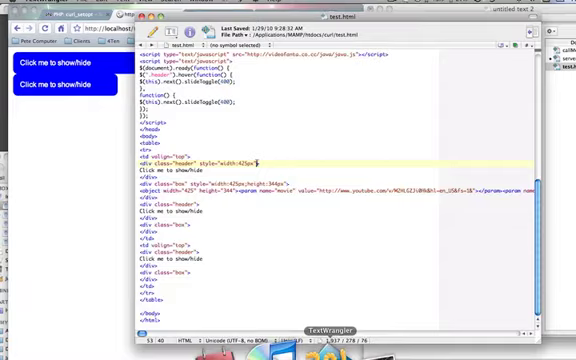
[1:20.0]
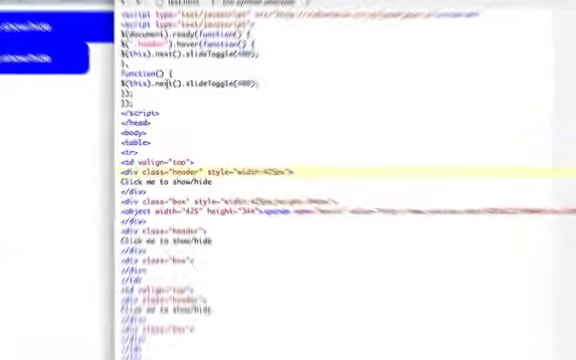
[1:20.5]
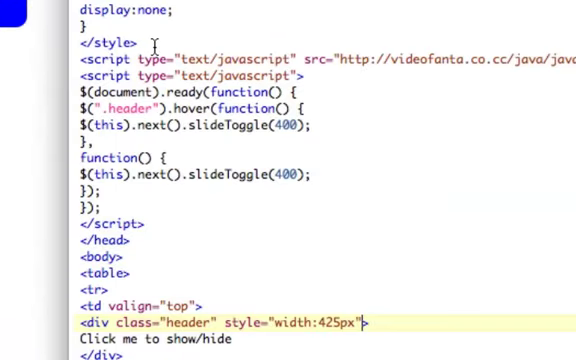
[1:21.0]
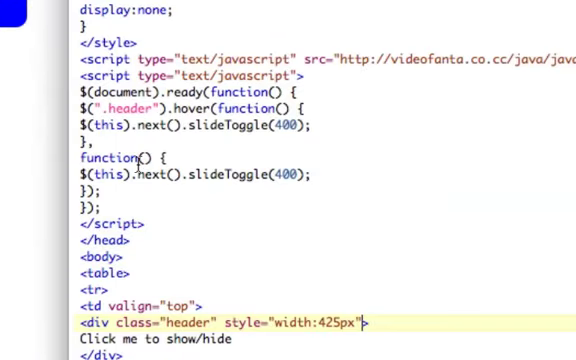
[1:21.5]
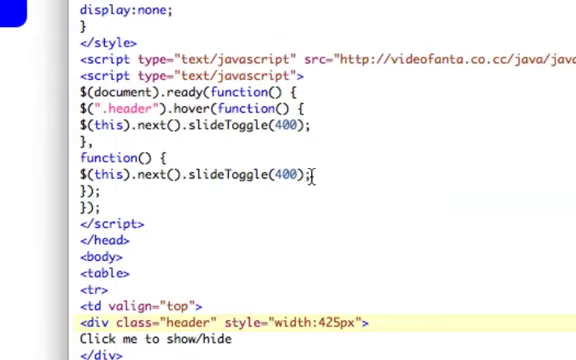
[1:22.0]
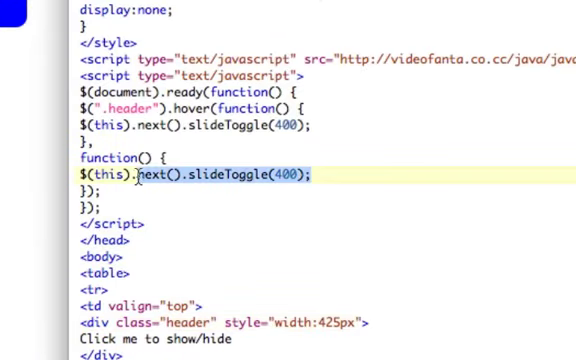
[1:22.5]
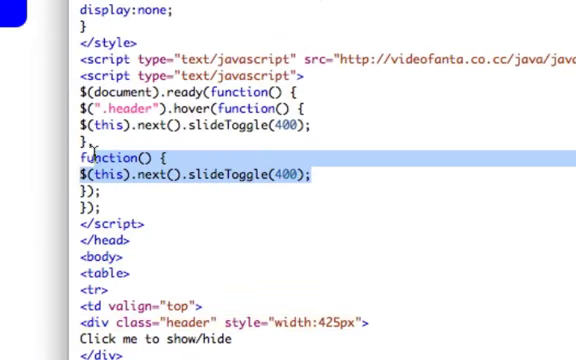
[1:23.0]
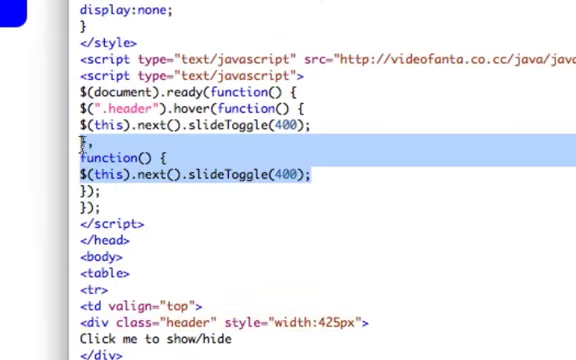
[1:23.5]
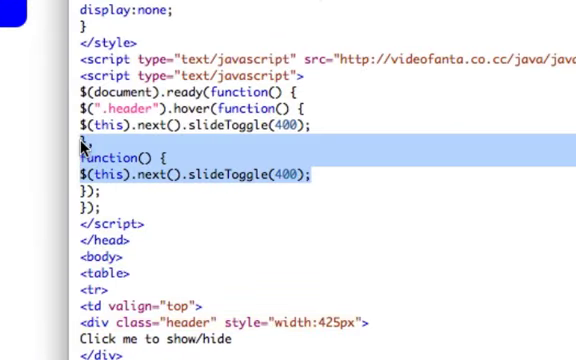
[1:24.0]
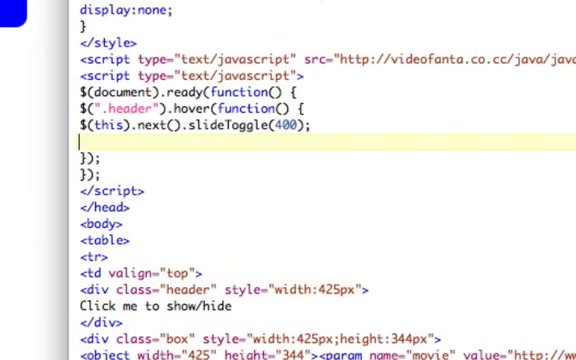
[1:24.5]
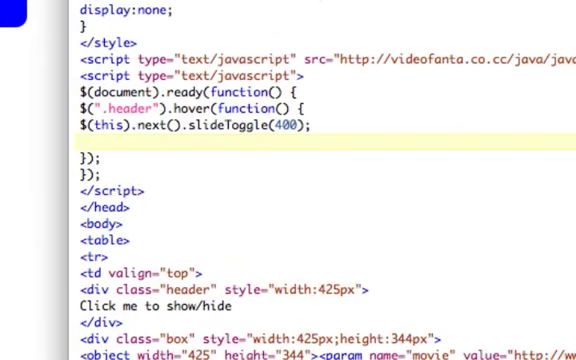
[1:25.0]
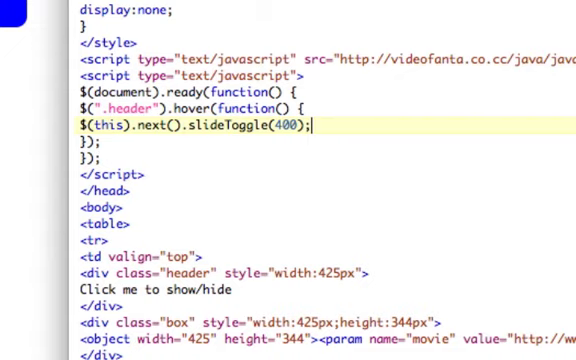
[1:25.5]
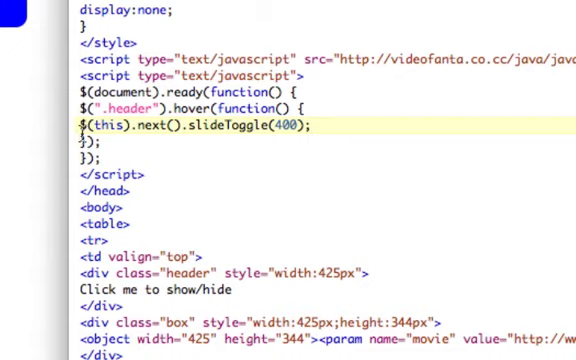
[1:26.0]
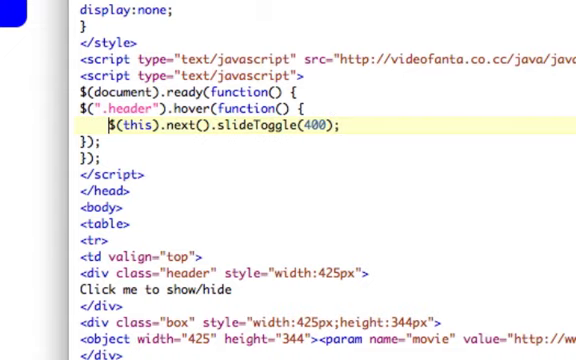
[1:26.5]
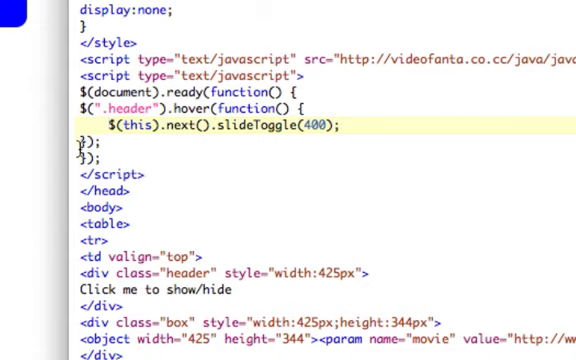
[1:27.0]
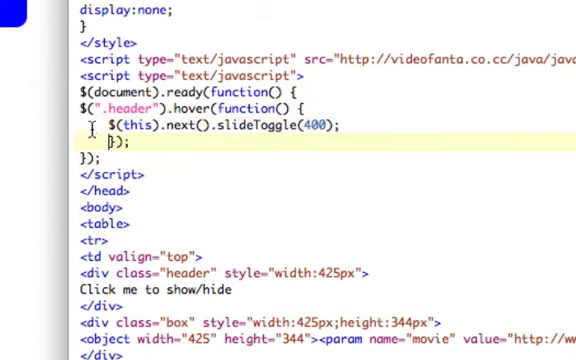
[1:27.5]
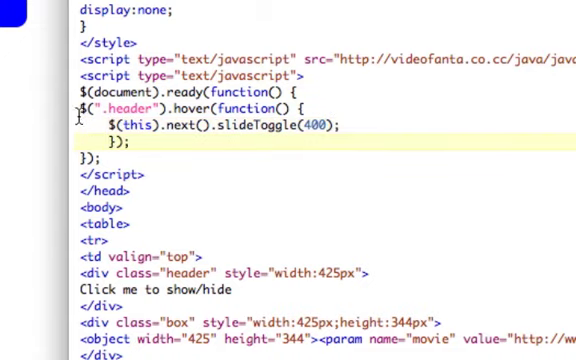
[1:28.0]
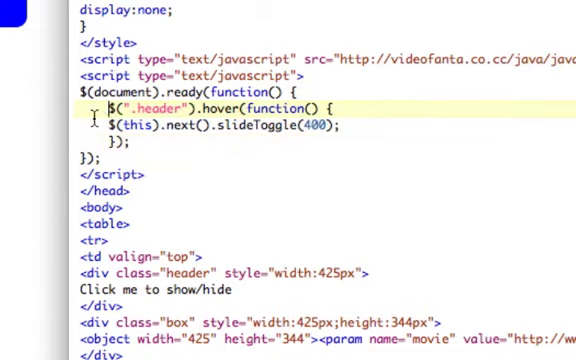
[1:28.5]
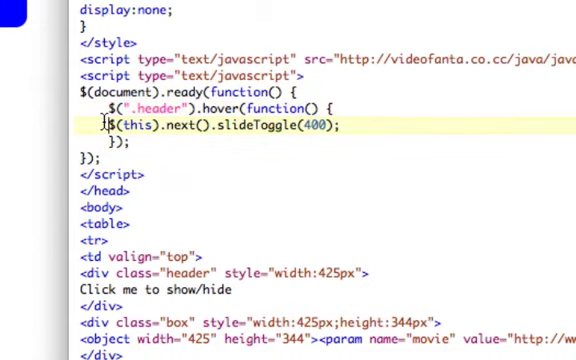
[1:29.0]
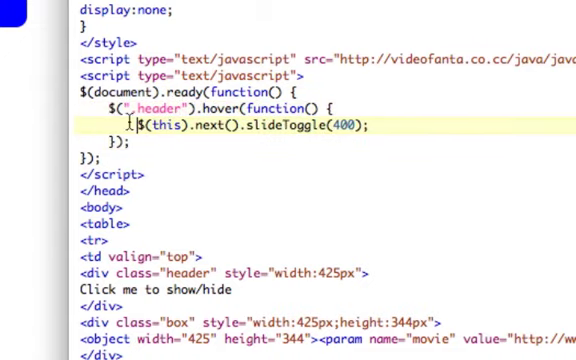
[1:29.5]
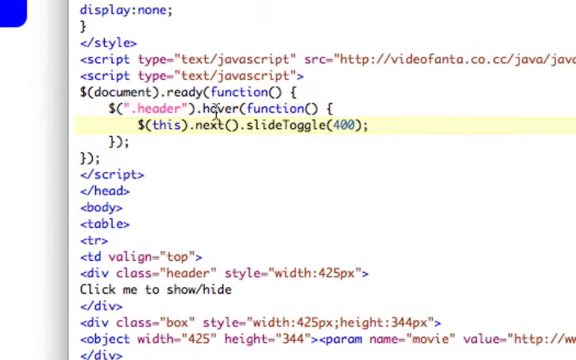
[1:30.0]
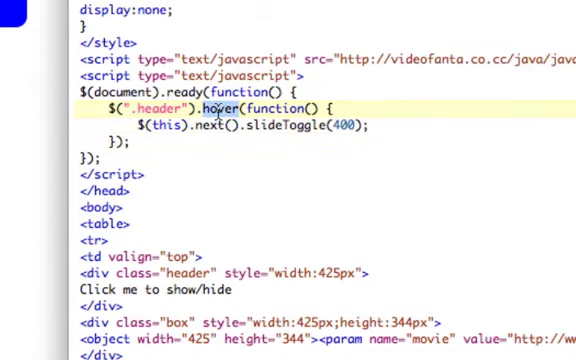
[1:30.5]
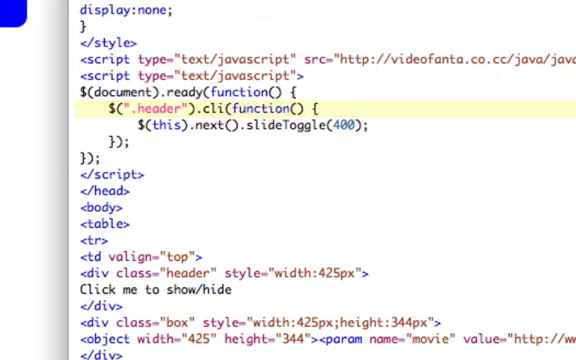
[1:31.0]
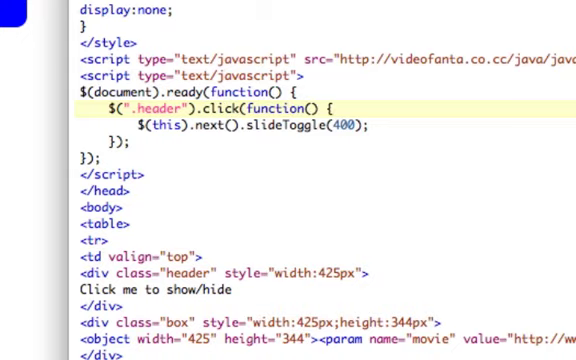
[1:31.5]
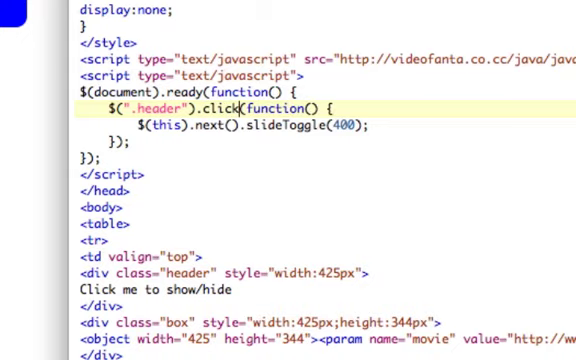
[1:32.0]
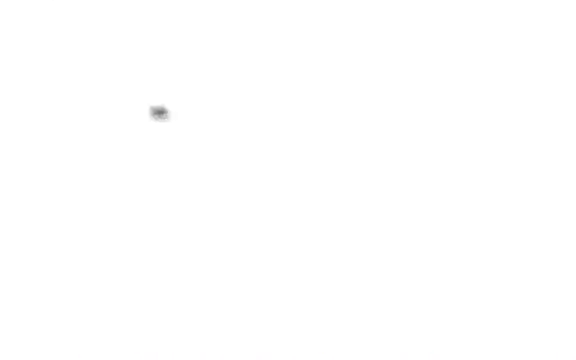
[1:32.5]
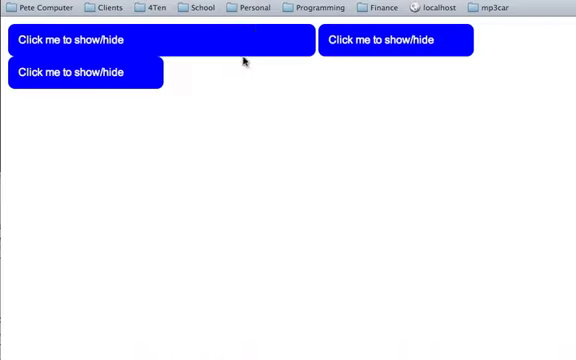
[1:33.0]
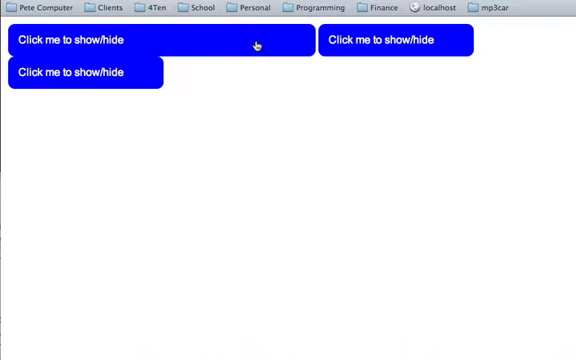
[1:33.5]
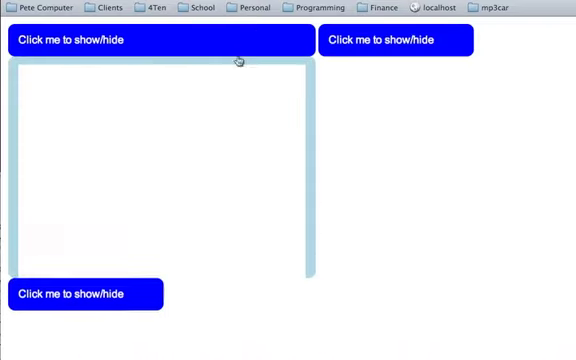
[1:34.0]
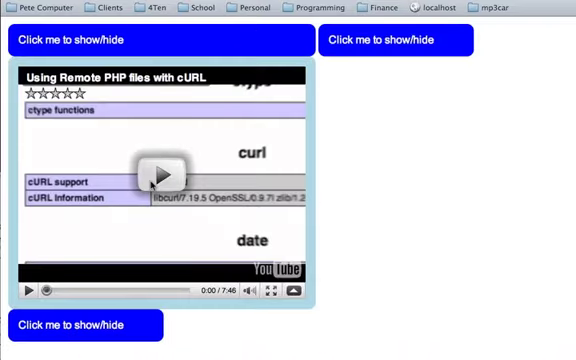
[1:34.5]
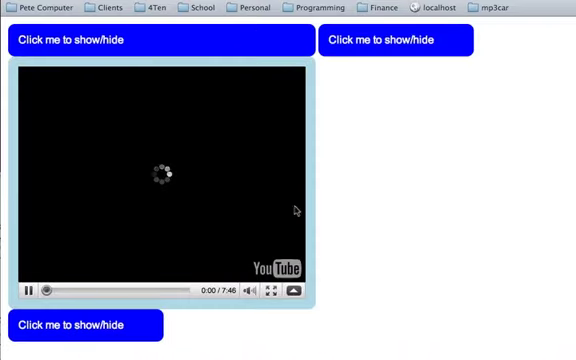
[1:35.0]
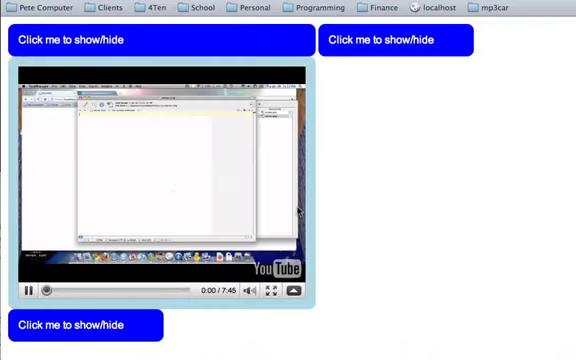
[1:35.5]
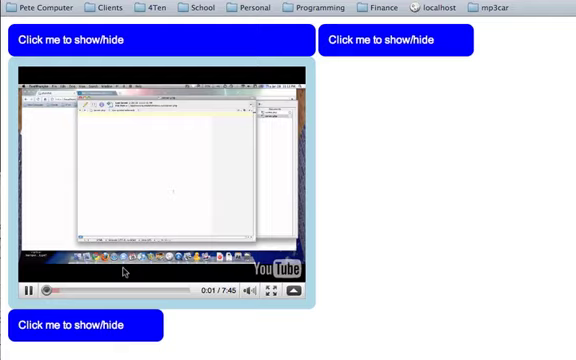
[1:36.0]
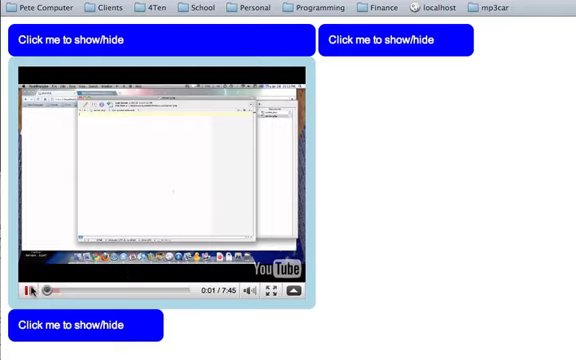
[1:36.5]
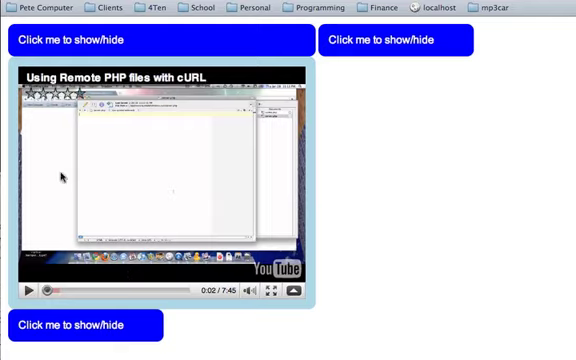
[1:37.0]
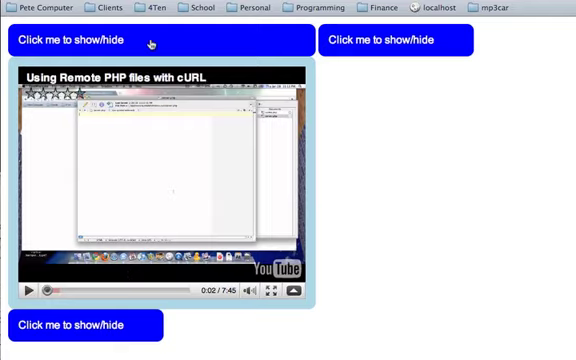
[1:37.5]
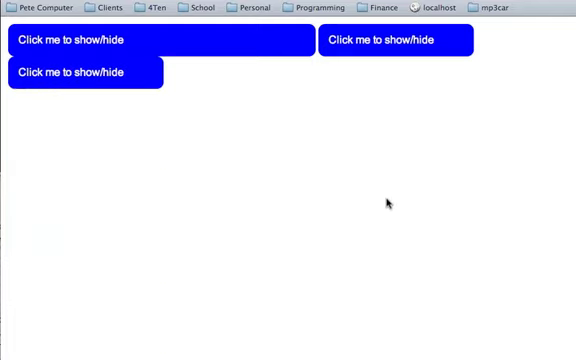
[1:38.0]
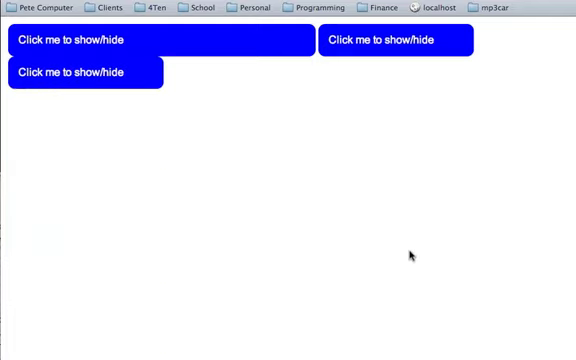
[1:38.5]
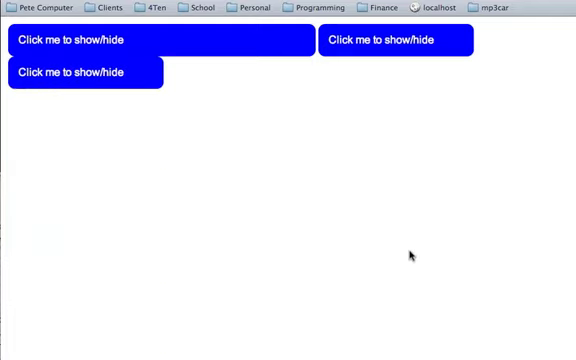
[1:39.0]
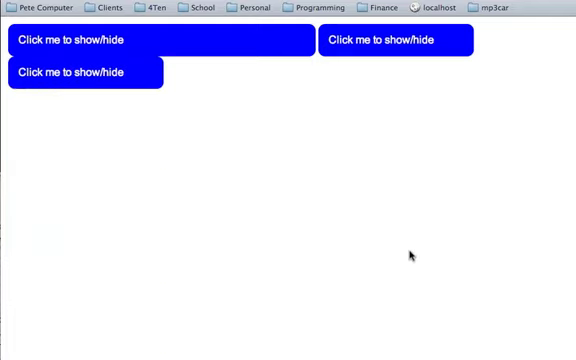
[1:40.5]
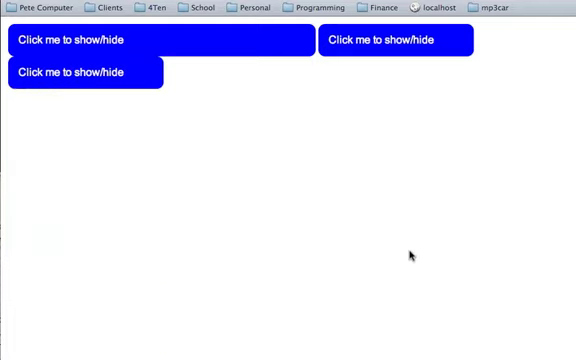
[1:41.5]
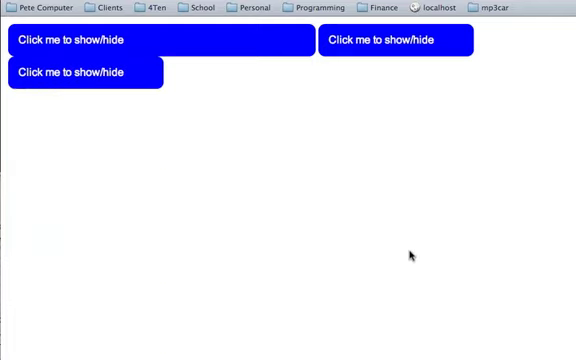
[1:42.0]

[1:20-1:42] Someone is recording their computer screen. A web browser is in the background, while the active window is labeled "test.html" and contains multiple lines of code relating to opening a box and showing a button in a web browser. They are editing lines that read "this.next slide toggle 400," highlighting these lines and deleting them. They then go up to a different button, format various lines using tabs and spaces, and type text that reads "click." They go to the browser, which has three blue buttons all with the same white text reading "click me to show / hide." They click on the top left one, and a light blue rectangle extends from the bottom with an embedded YouTube video in its center. They click the play button, and the YouTube video plays for a few seconds before the user pauses it.